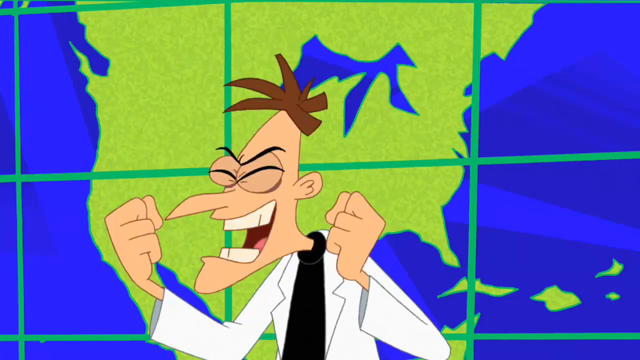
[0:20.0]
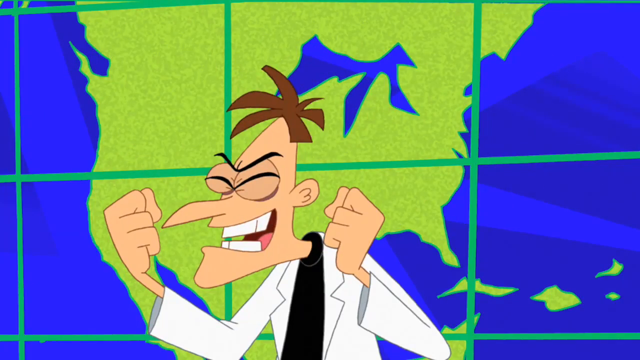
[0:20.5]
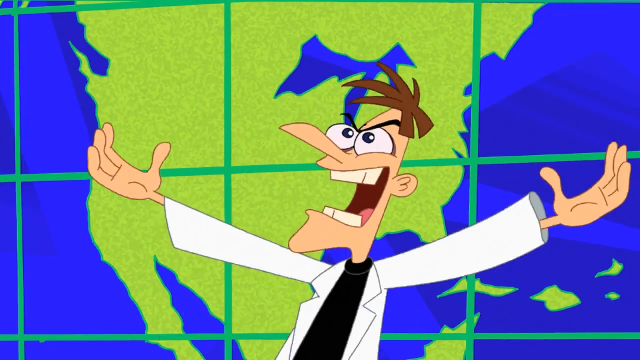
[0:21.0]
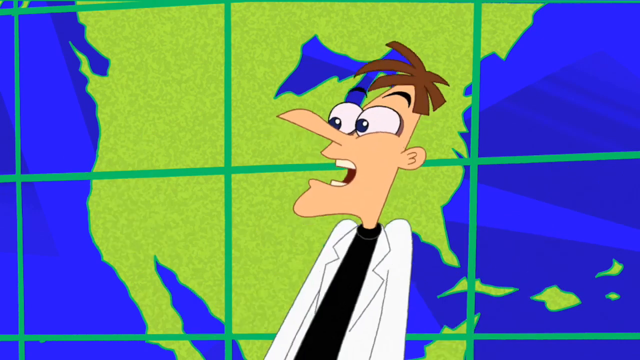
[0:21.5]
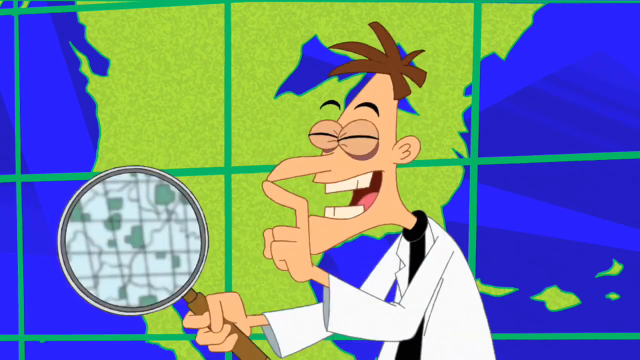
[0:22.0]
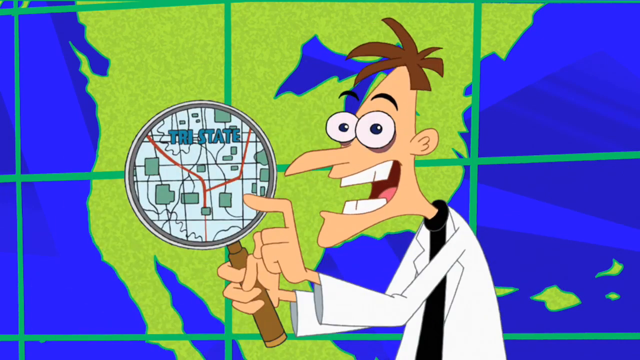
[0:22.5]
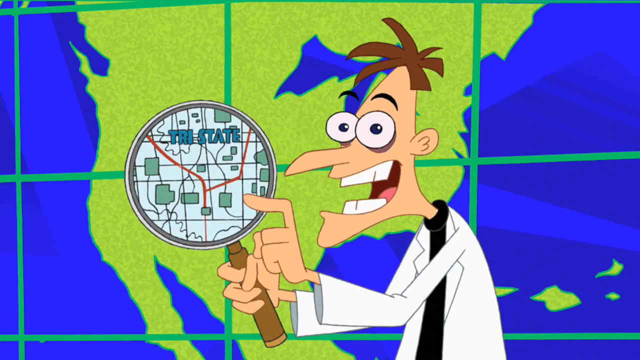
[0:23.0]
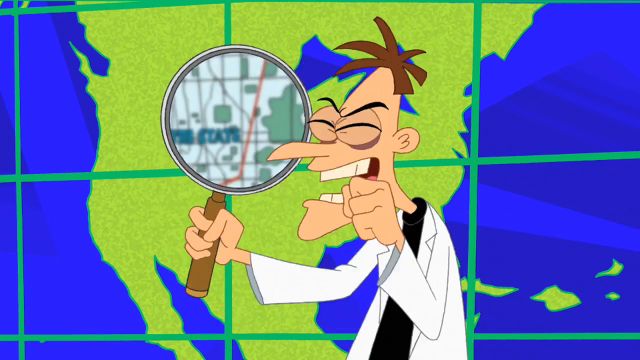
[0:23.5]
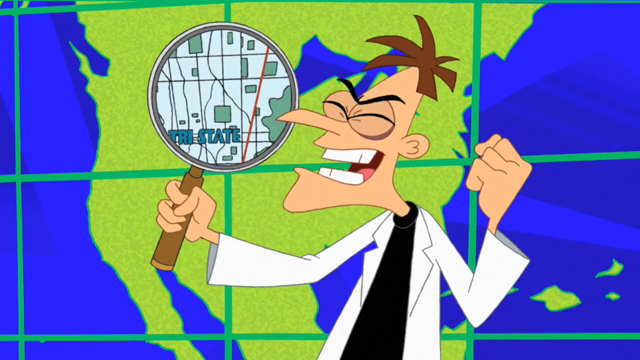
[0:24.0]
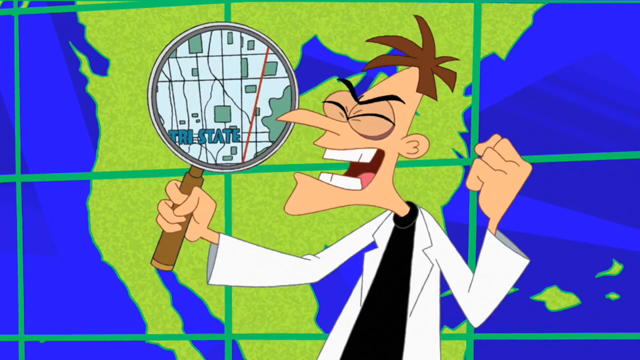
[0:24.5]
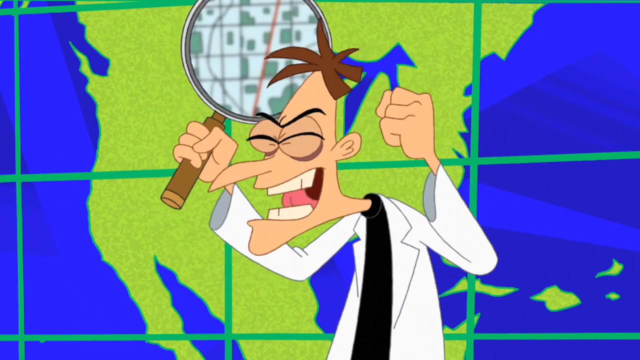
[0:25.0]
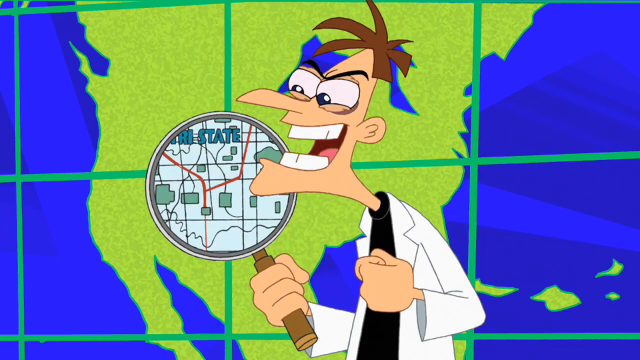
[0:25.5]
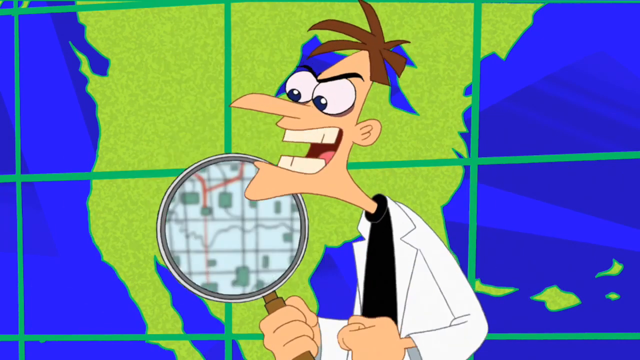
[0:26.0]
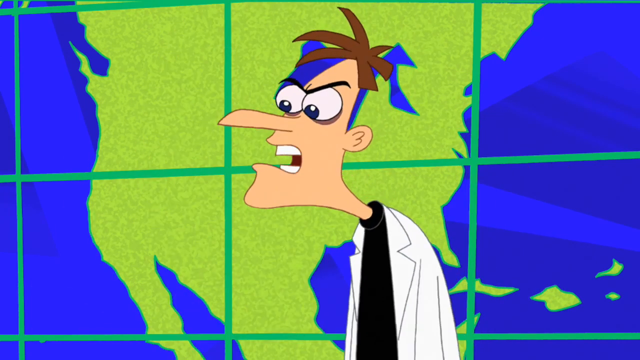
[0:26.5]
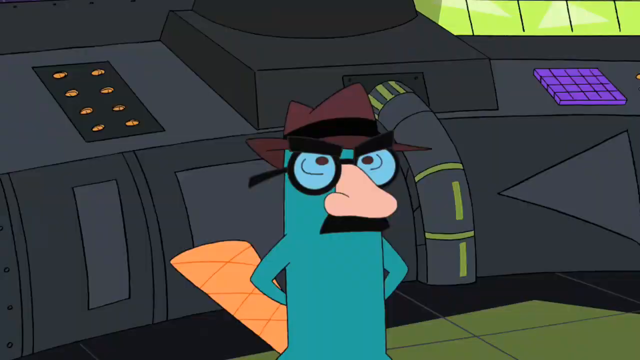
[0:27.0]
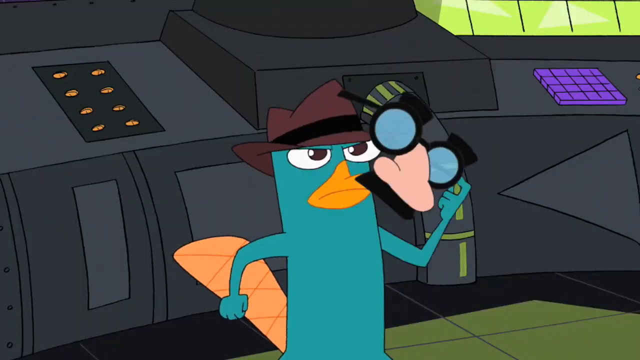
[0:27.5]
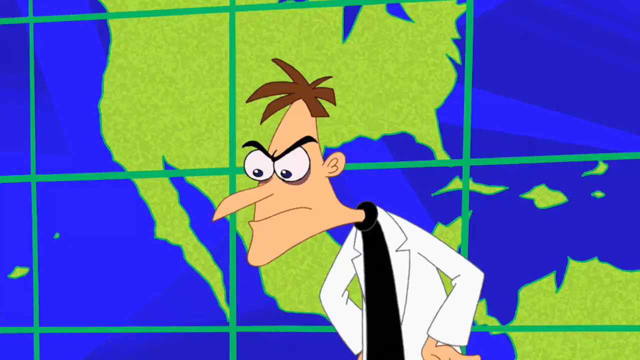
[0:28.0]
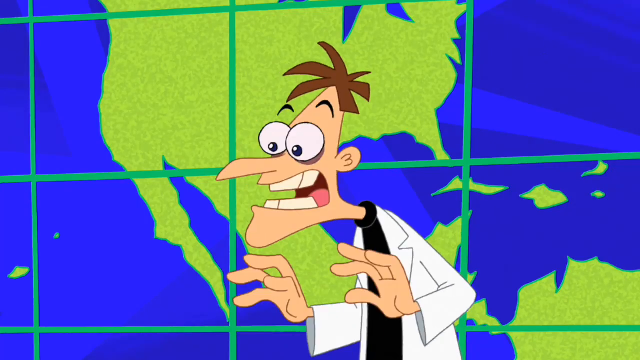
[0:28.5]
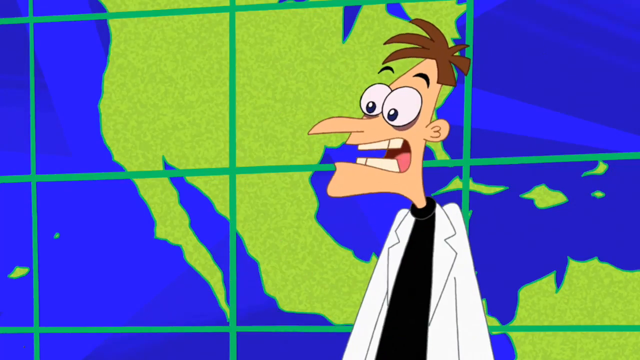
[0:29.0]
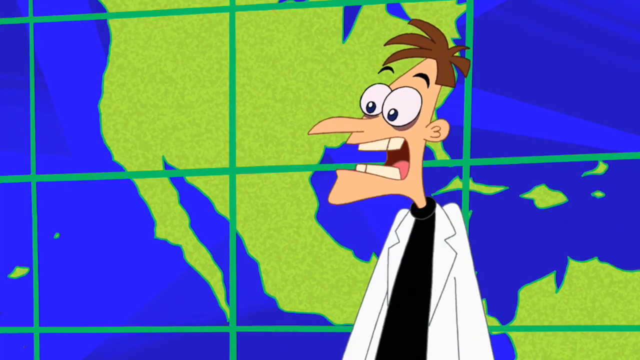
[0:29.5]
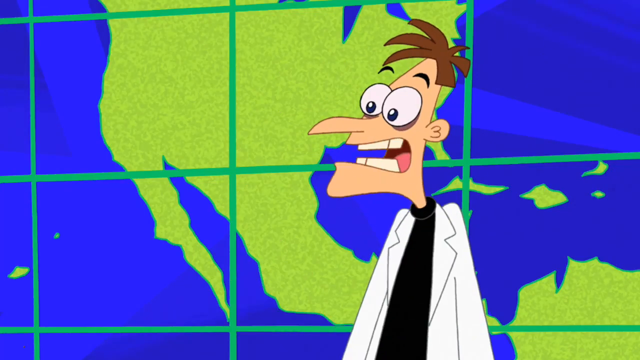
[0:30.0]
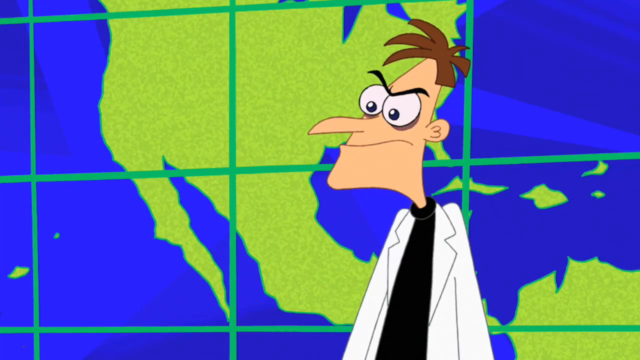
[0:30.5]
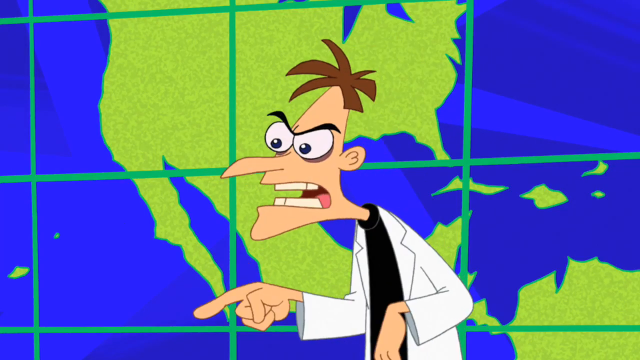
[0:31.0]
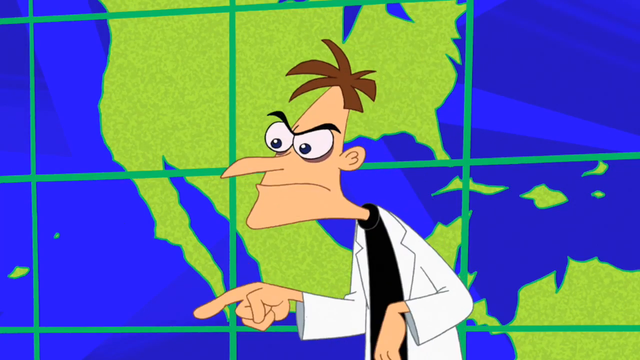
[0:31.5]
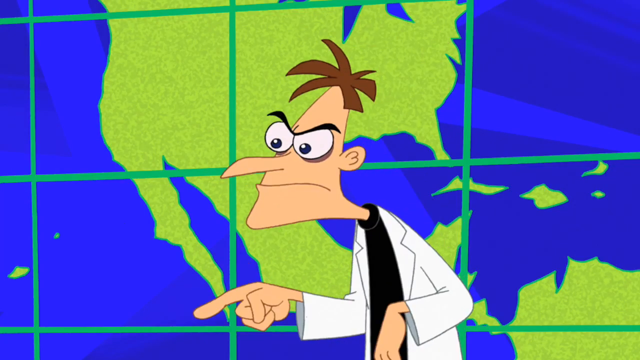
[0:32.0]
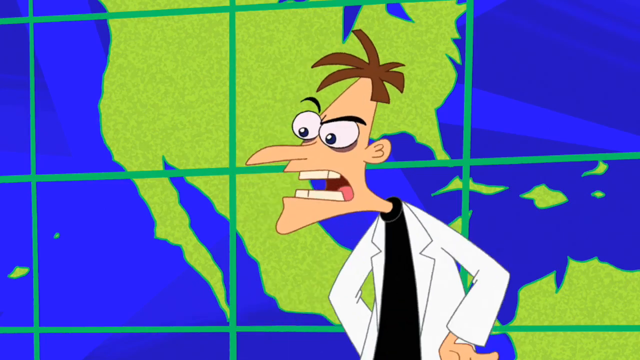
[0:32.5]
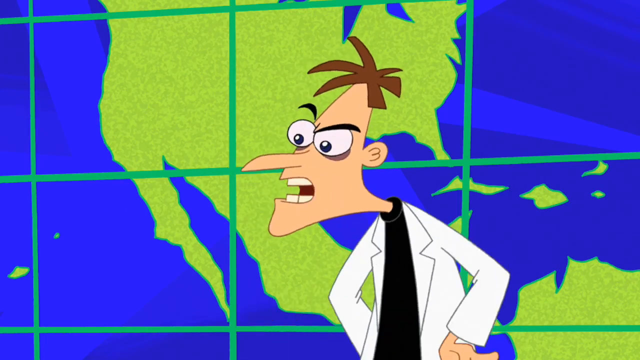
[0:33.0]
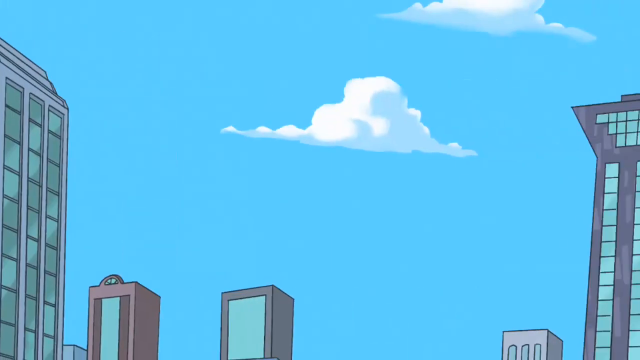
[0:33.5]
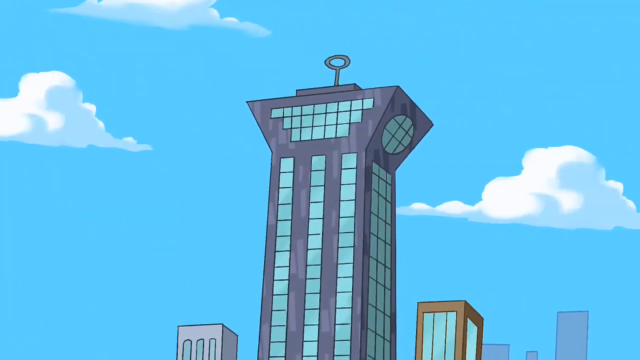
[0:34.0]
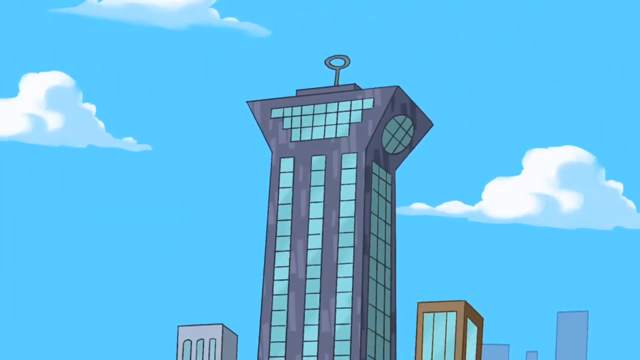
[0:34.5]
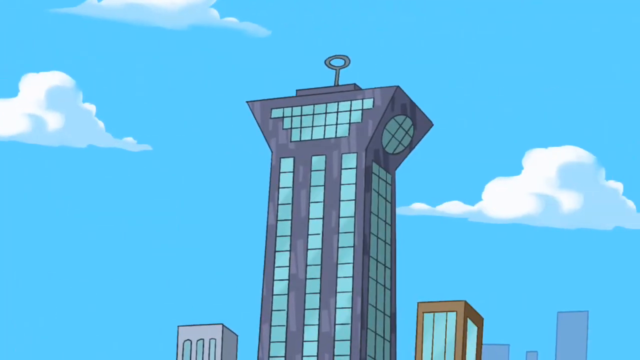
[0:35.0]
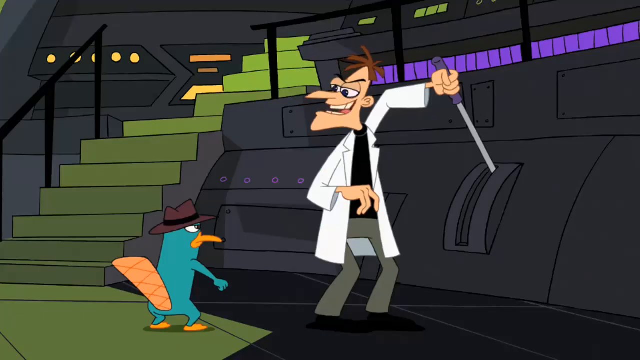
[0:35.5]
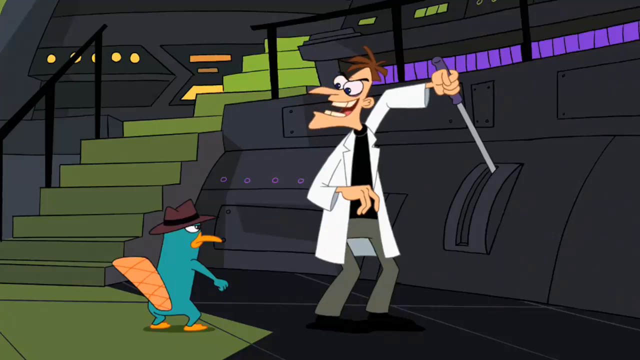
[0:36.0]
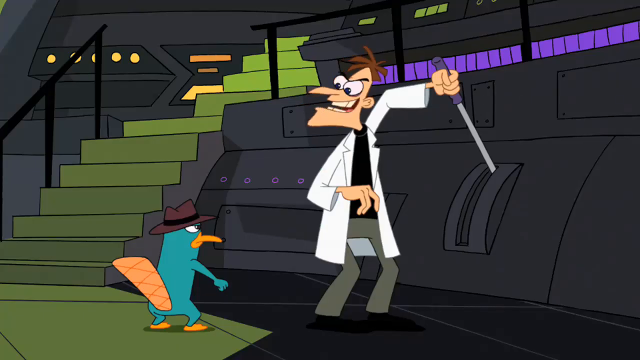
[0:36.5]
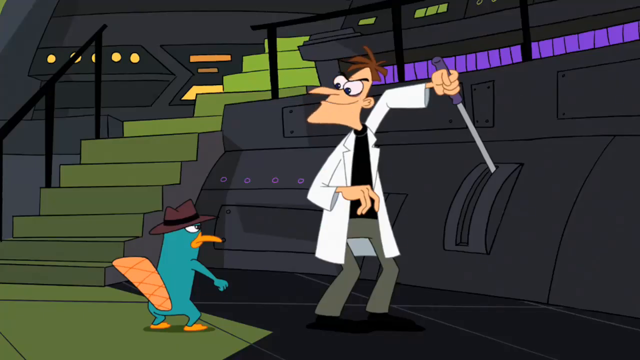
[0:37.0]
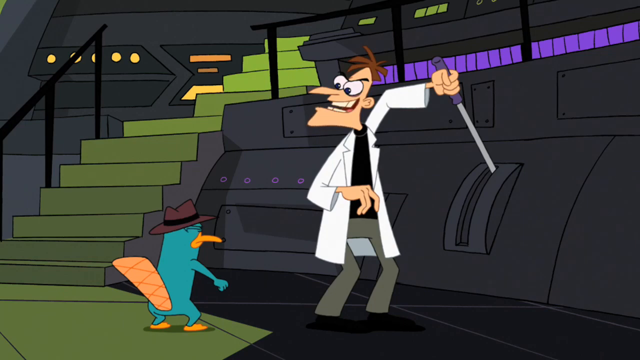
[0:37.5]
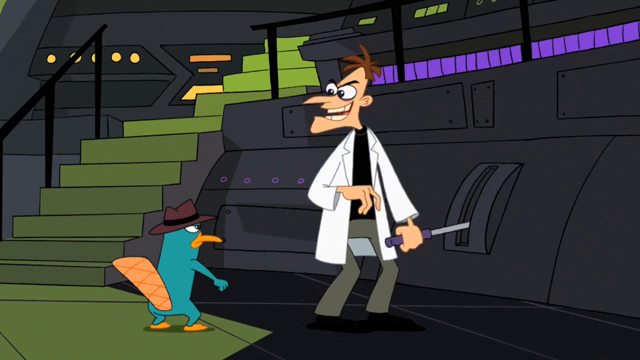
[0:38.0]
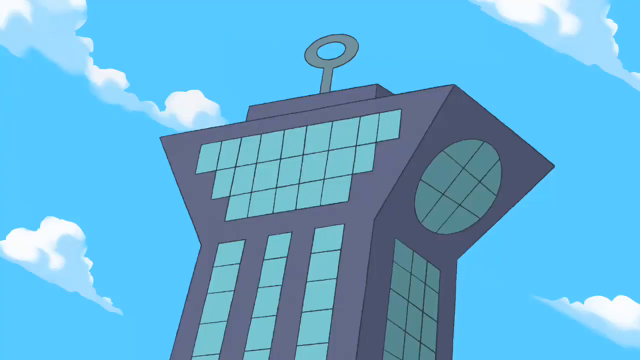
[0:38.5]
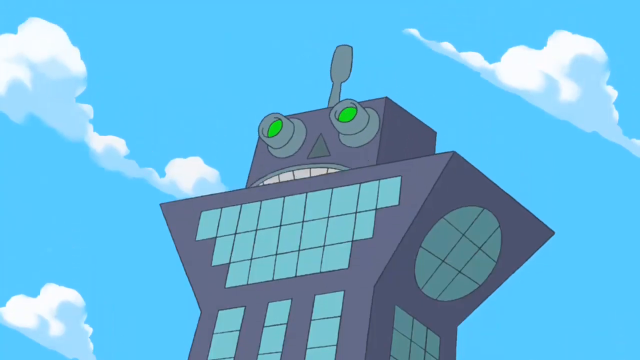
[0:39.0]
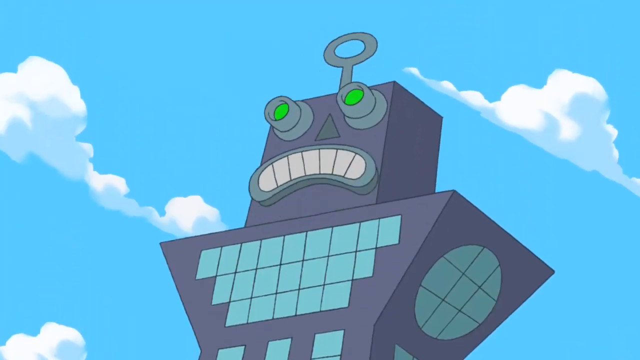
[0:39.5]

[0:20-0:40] The evil mad scientist holds up a magnifying glass of sorts in front of a huge world map on what looks like a giant computer screen while arguing with the animalistic character, the small creature with the mustache, glasses and huge nose. Things move fast. It is unclear whether the two are at odds or collaborating. It looks like the scientist pulls a lever, seemingly to engage some kind of weapon.